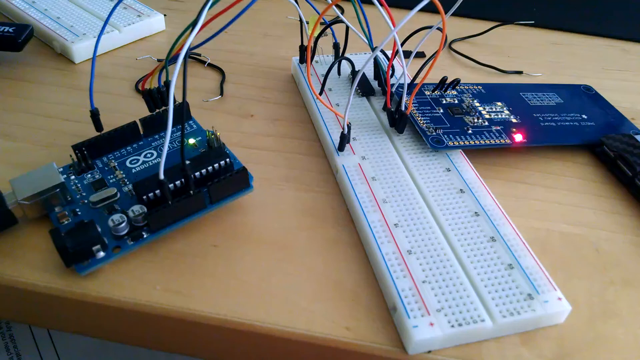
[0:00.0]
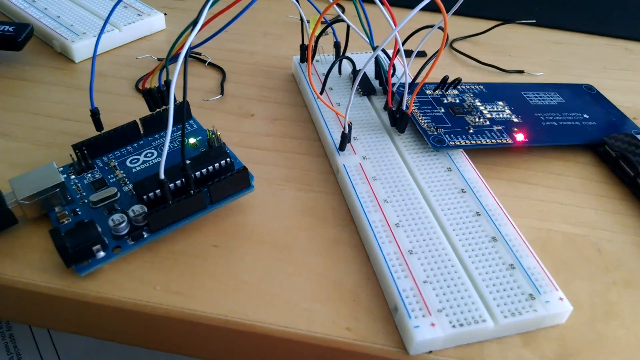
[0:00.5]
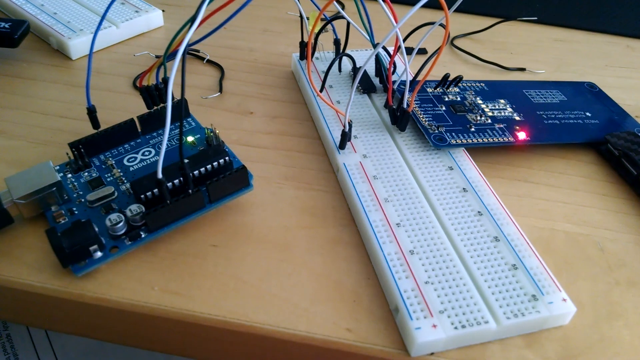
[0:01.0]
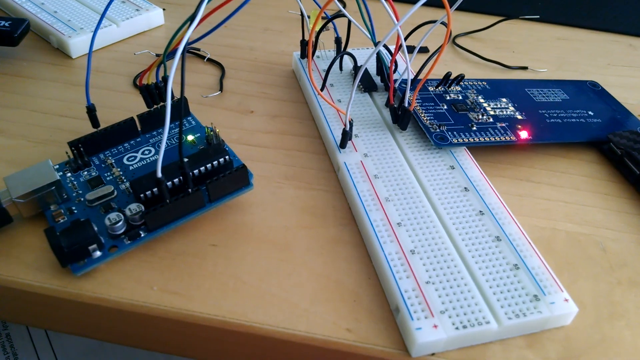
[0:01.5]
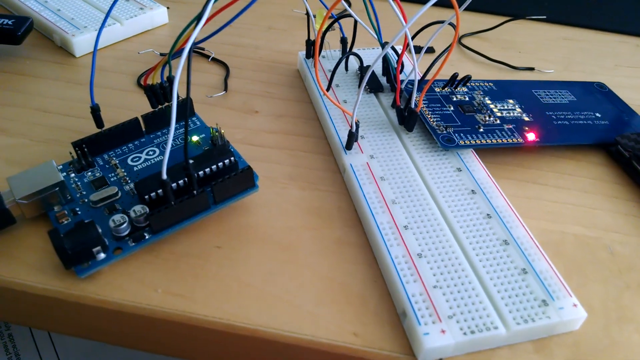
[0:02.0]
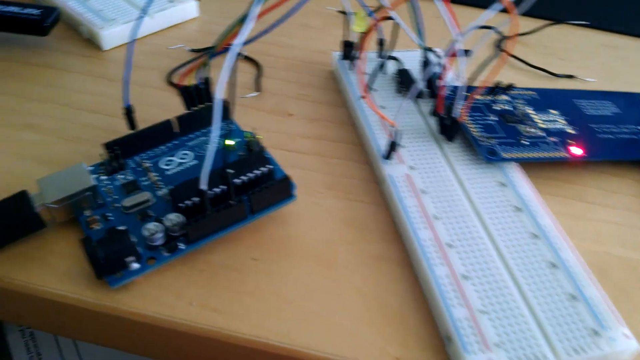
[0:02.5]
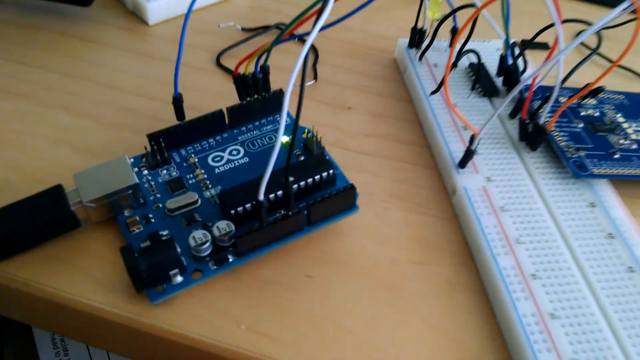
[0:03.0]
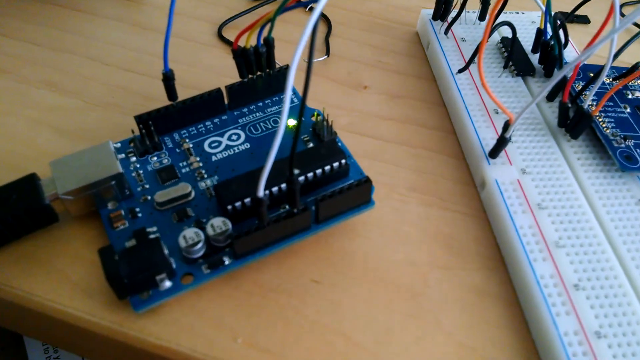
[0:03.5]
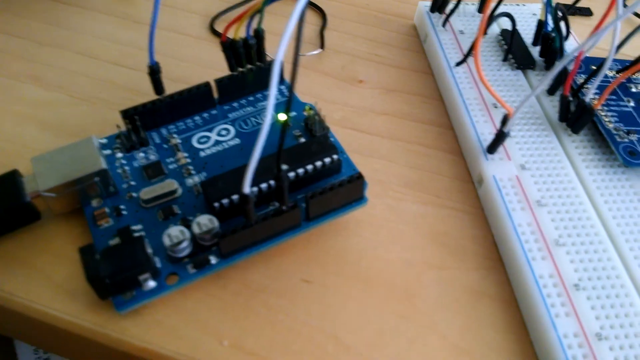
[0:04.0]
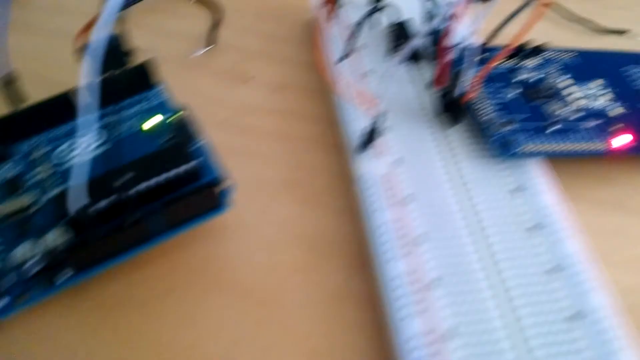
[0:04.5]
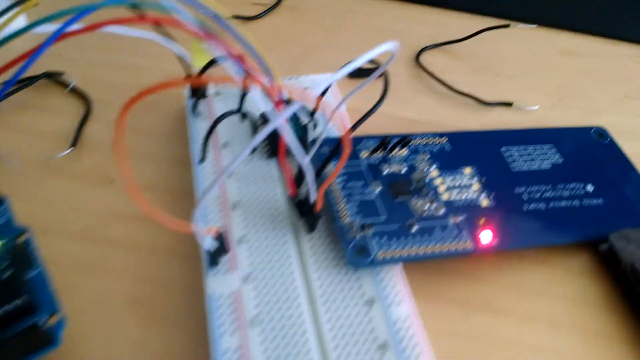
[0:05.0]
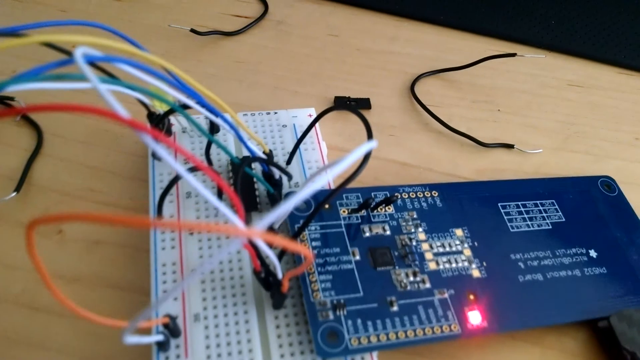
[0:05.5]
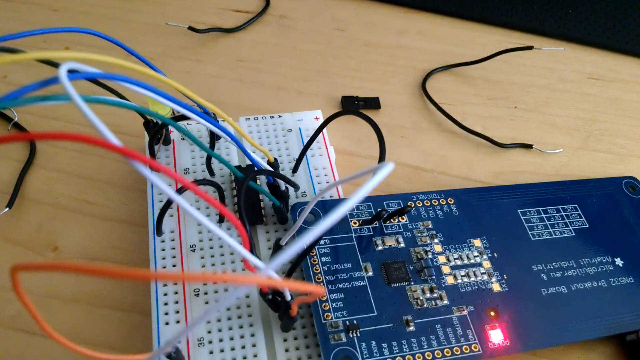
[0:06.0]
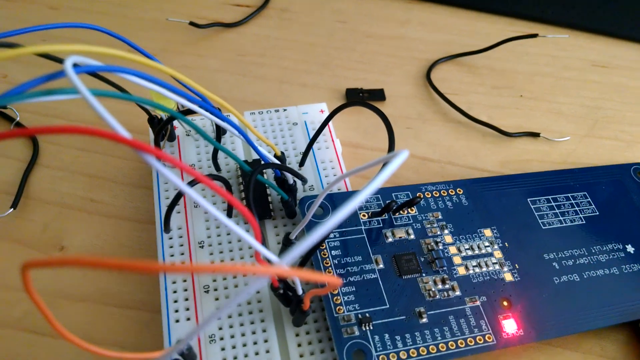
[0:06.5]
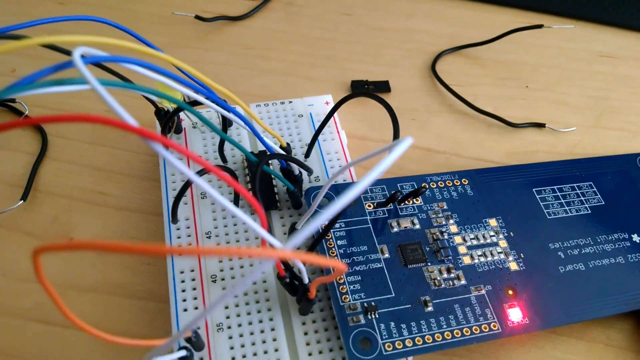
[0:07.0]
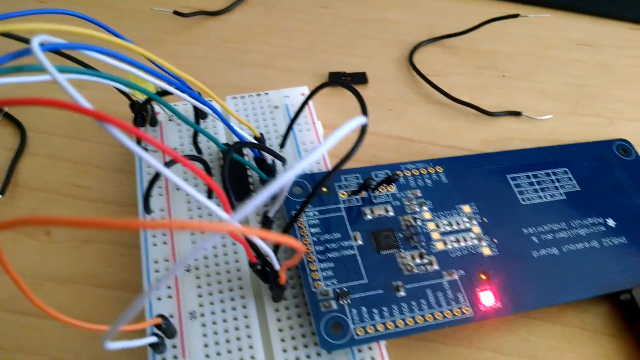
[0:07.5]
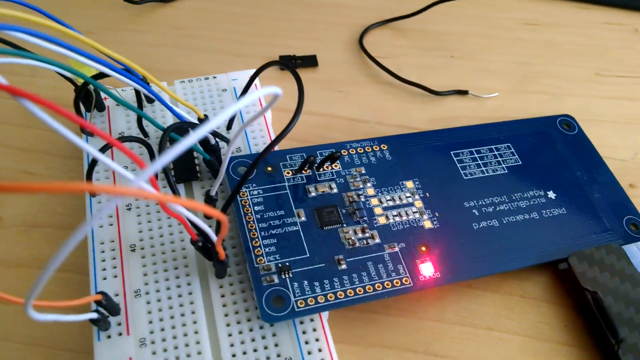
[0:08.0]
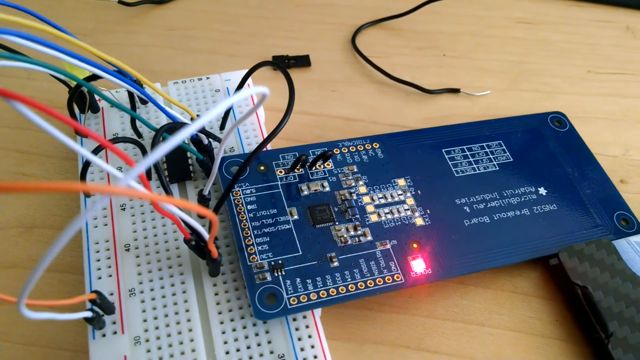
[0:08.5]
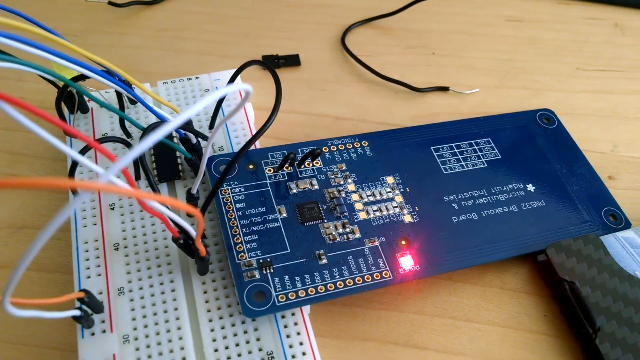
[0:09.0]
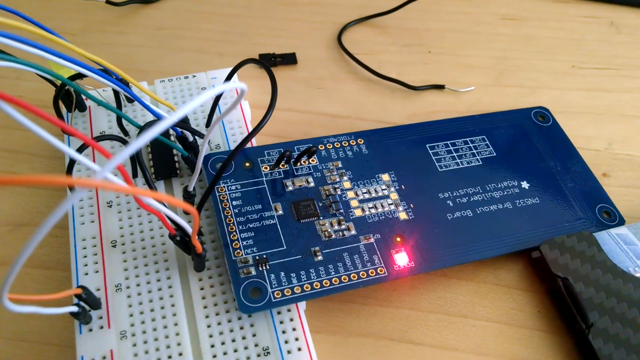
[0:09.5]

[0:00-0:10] A table holds a bunch of wires and electrical equipment. There is a really big electrical chip with a red light glowing on it, and another on the left with a yellow light glowing on it; the two are apparently connected to each other. A very long white part, much bigger than the chips, is in the middle, and both chips look like they are connected to this same white board, which presumably powers them in some way.